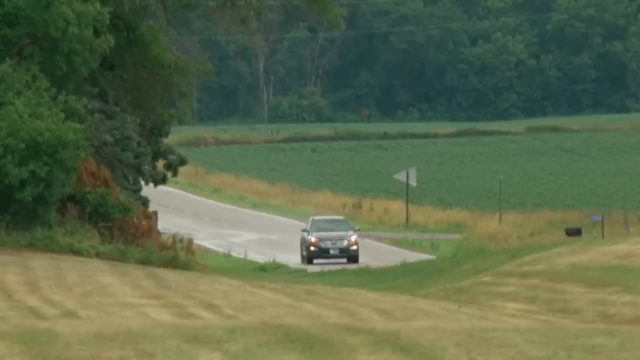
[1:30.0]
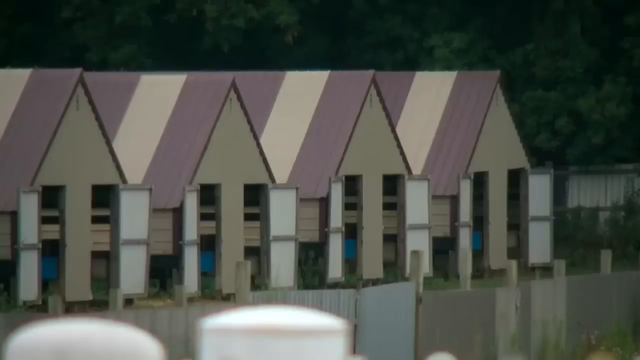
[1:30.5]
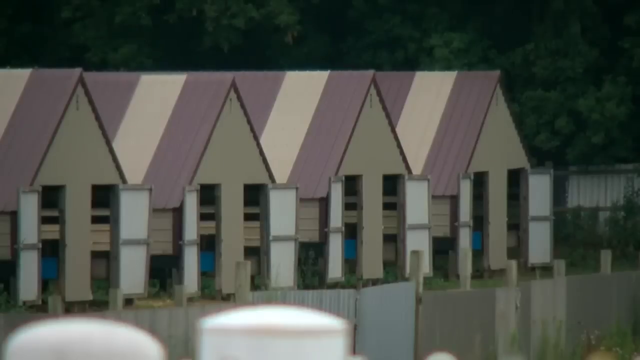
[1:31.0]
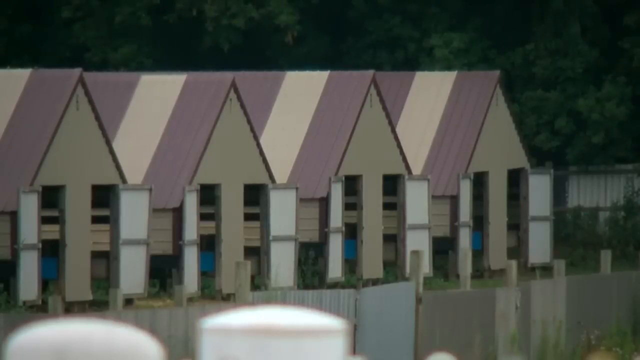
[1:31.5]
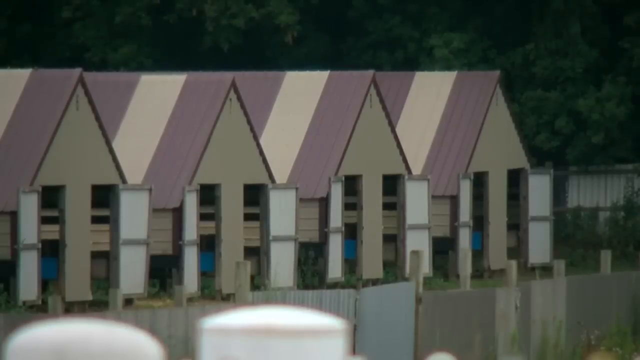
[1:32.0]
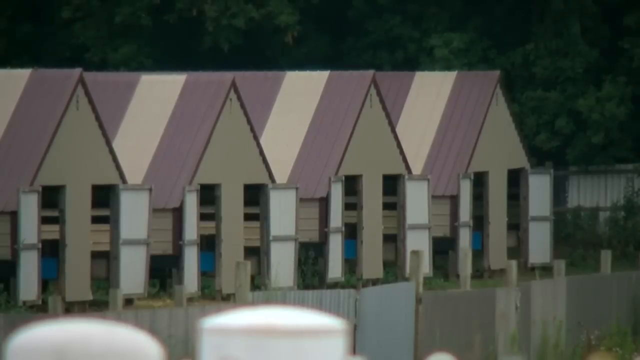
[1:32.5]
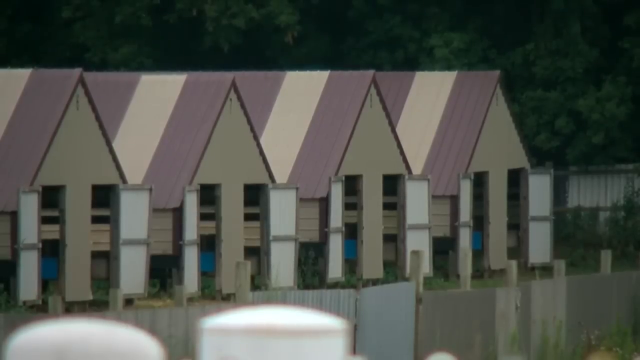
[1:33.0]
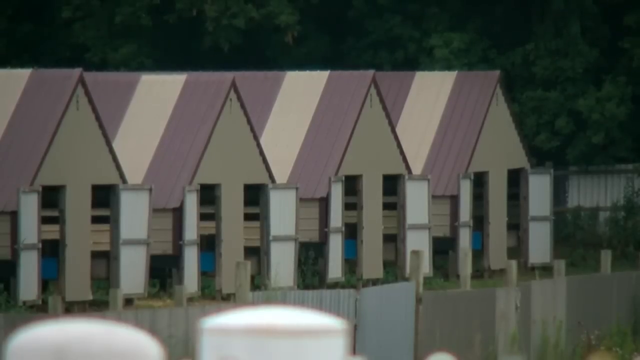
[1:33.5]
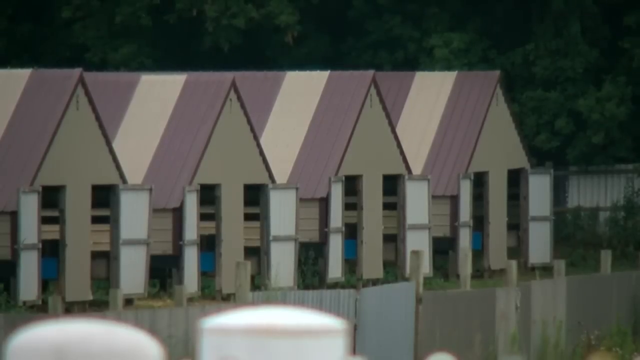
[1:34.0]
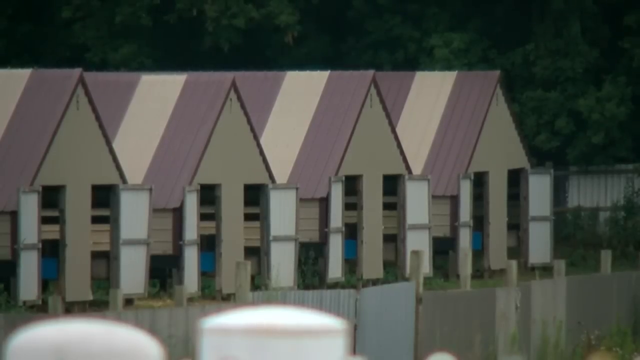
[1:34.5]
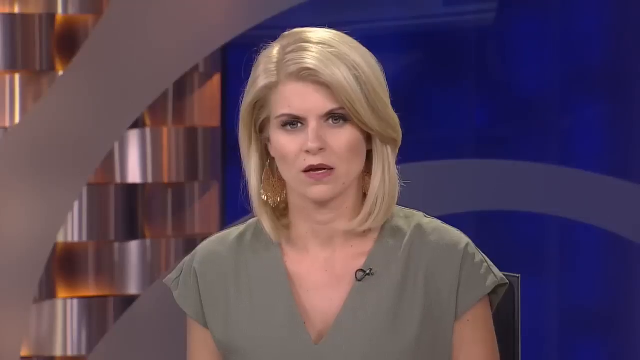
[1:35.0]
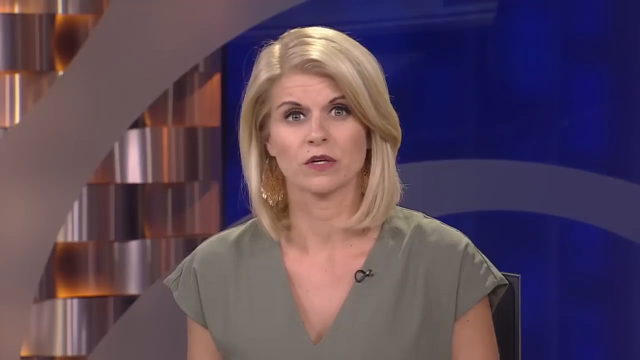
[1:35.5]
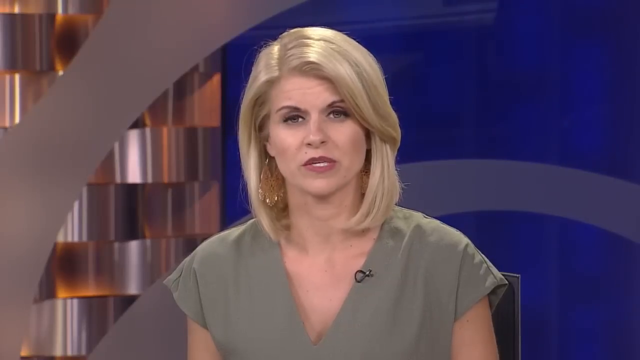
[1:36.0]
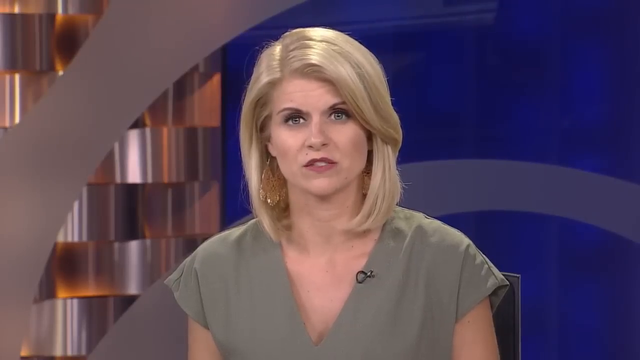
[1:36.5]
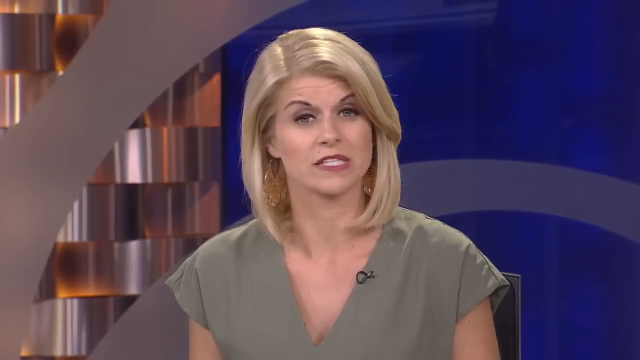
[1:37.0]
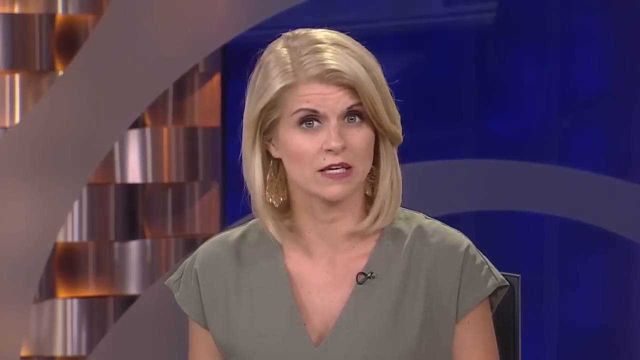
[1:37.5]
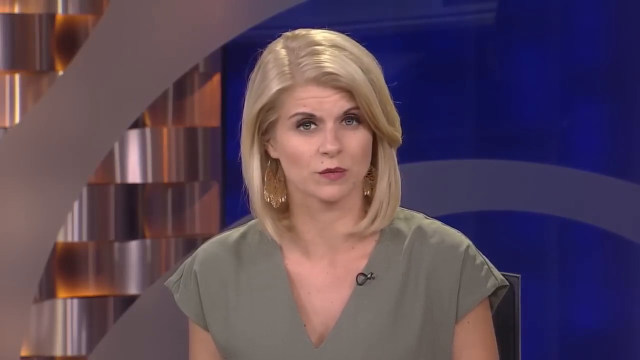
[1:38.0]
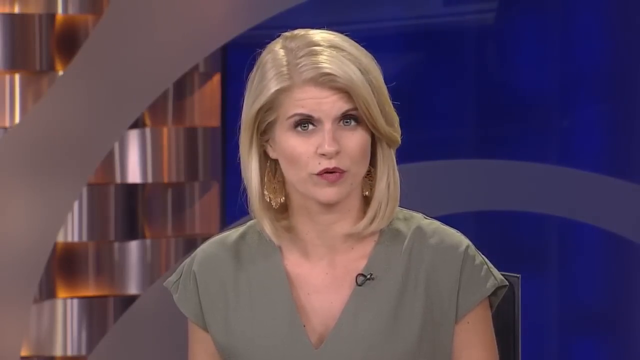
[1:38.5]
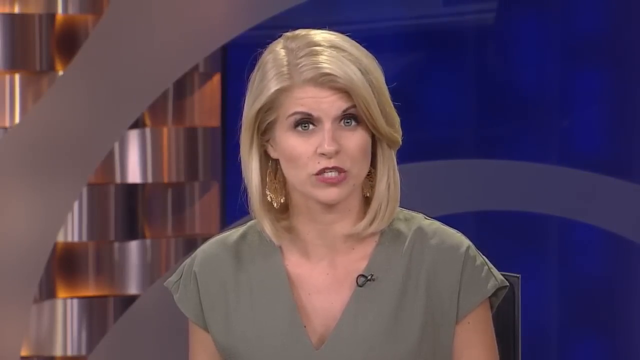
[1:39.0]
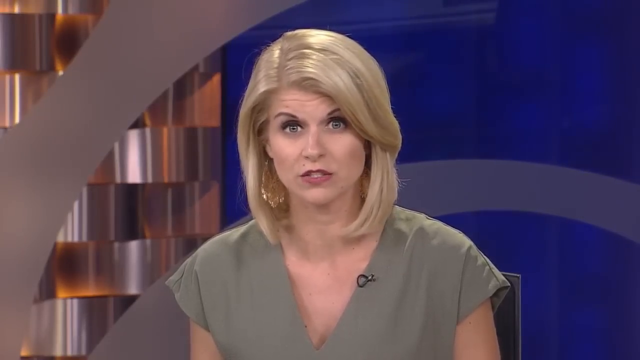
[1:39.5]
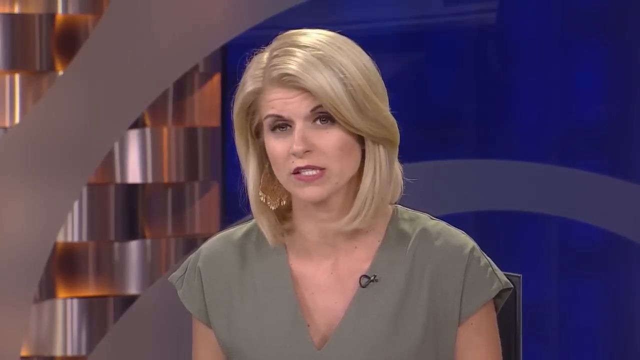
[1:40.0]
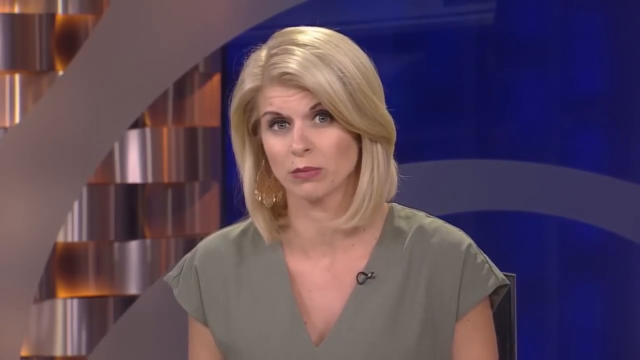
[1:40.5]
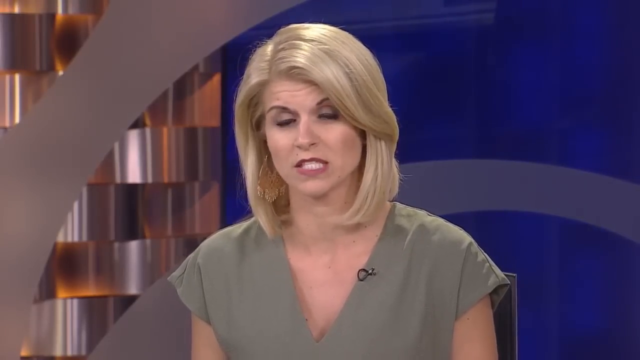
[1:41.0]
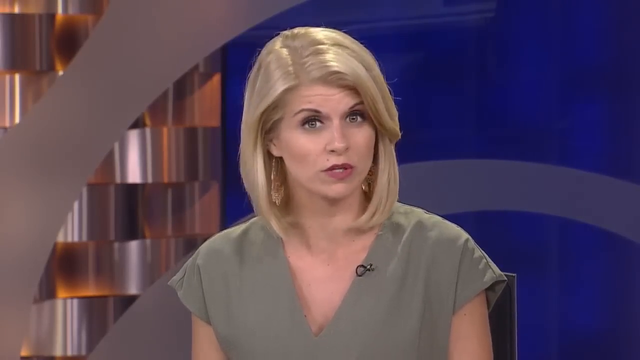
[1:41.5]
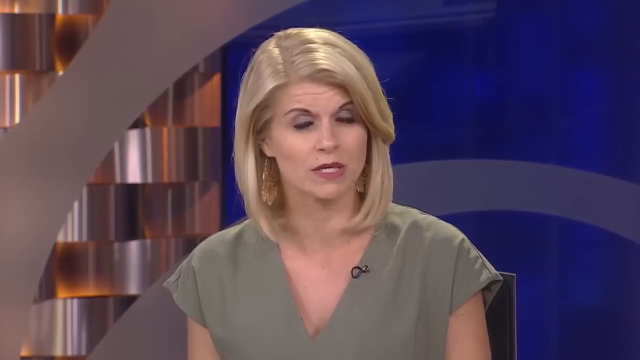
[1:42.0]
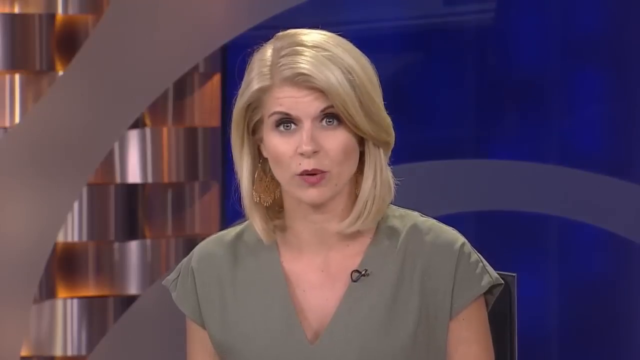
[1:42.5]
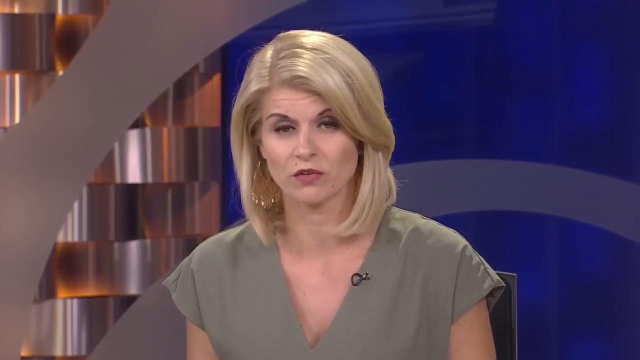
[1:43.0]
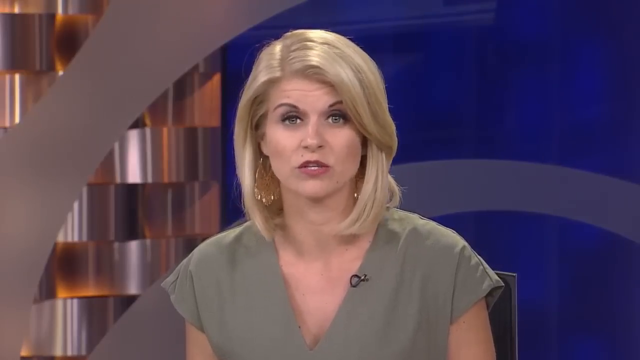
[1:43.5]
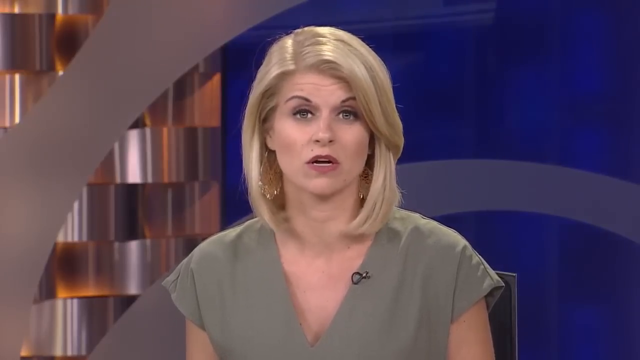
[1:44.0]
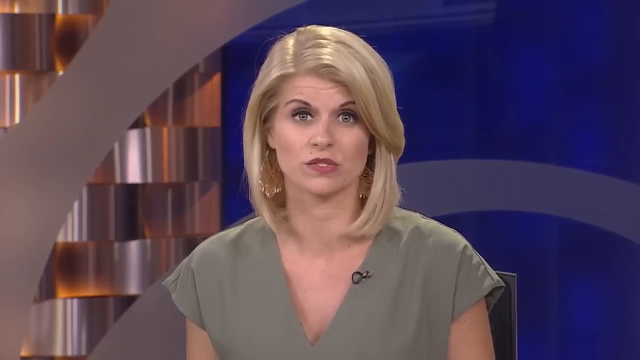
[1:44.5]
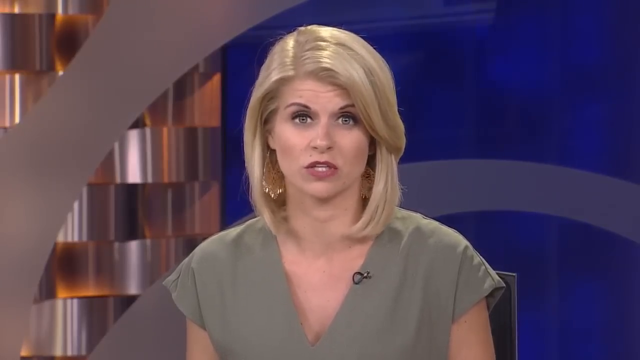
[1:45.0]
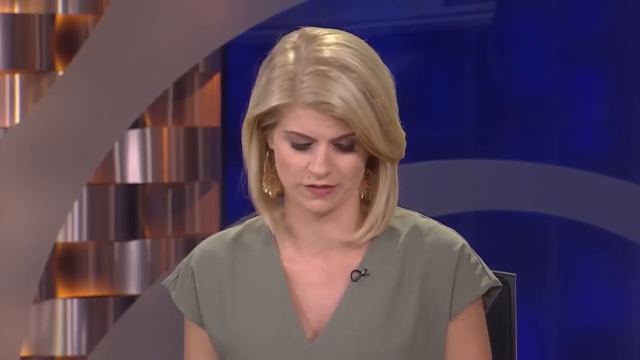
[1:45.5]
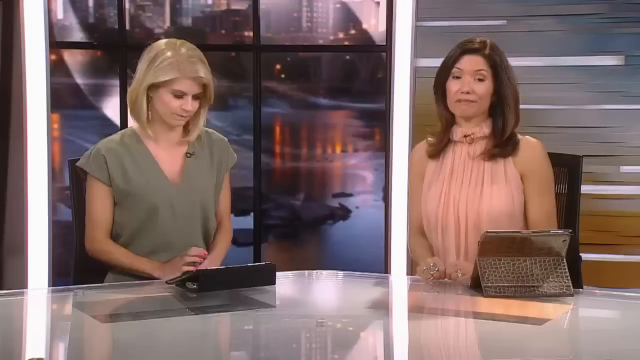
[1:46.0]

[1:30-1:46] The car drives further up the road, and then the video cuts to a different shot of the mink farmhouses. Their shutter-style farm doors are all open outwards, and the shot lingers on them. The video cuts back to the news anchor from the beginning, now more zoomed in, with a different background: a metallic pole to her left and a swoosh over a blue background behind her. She is talking. Finally, the shot zooms out a little to show her with another female news anchor who has brown hair and looks like she is wearing a pink top.